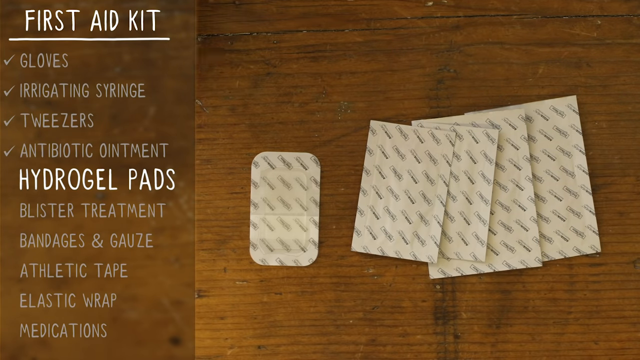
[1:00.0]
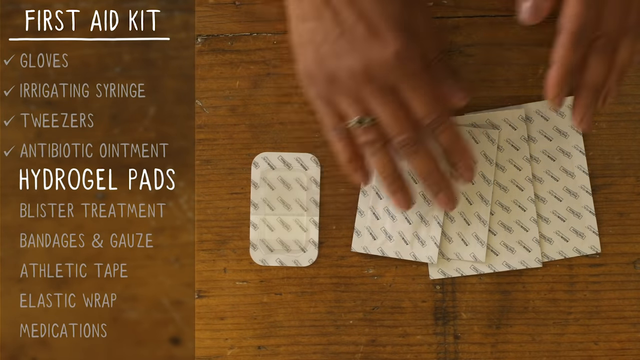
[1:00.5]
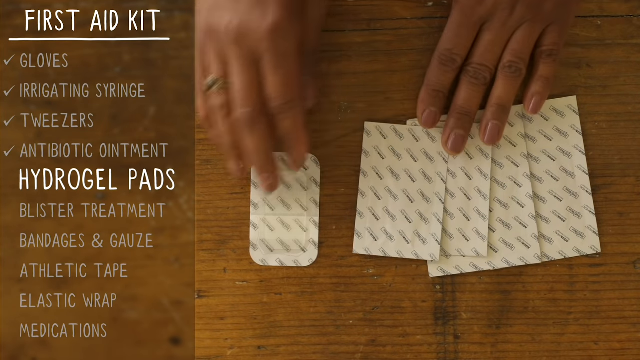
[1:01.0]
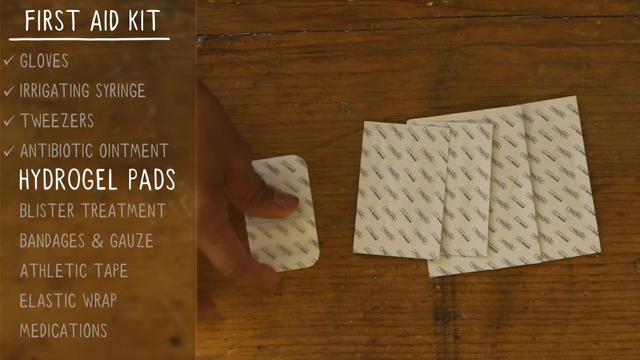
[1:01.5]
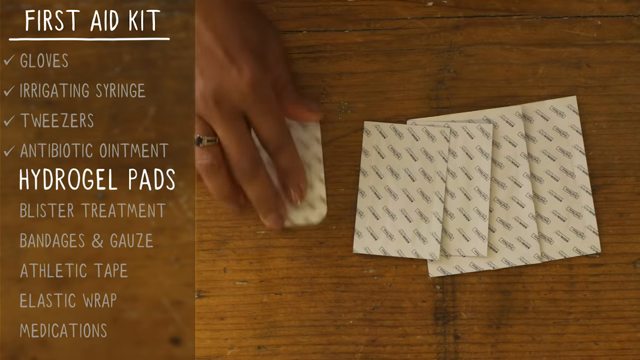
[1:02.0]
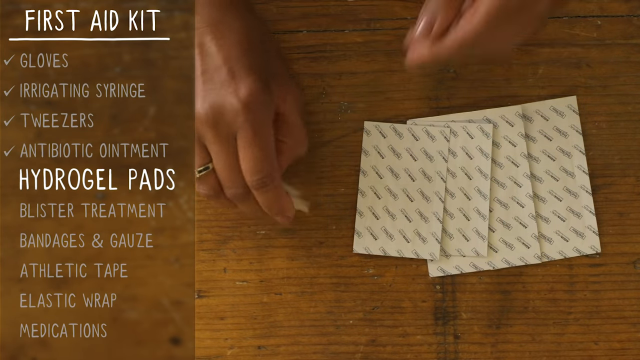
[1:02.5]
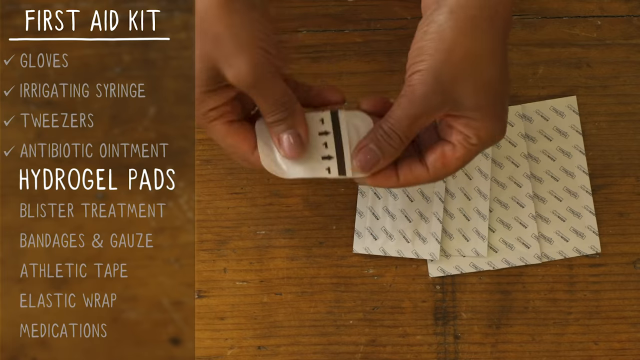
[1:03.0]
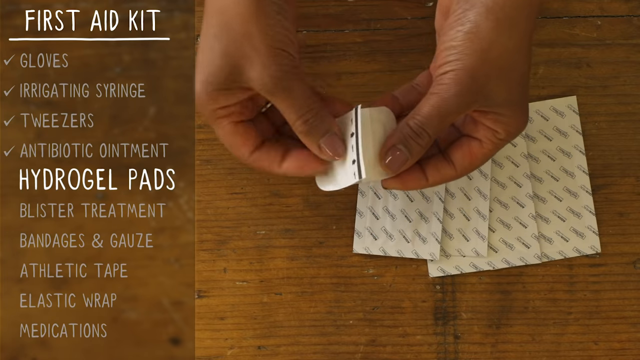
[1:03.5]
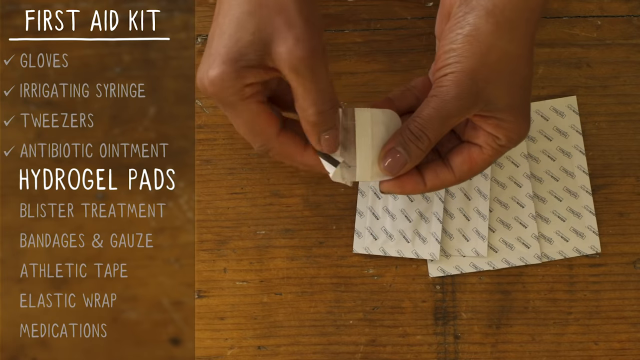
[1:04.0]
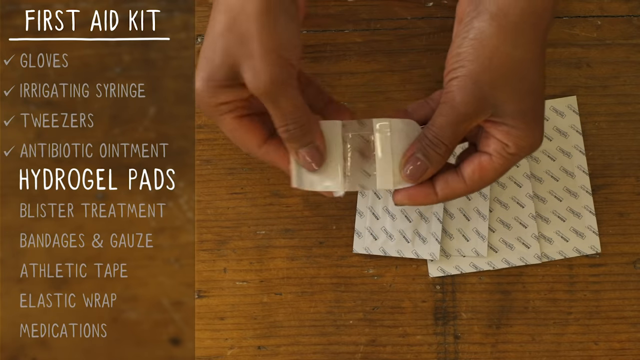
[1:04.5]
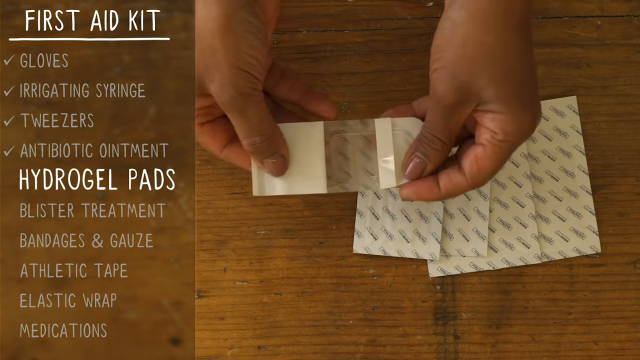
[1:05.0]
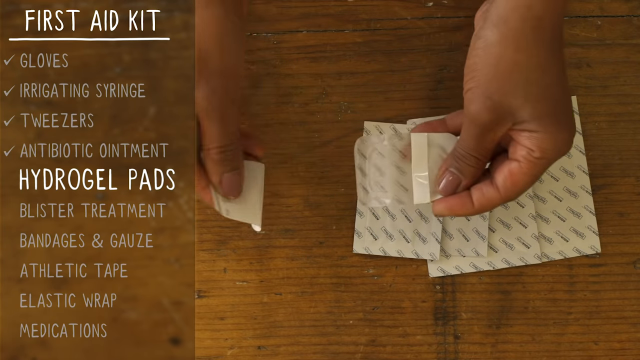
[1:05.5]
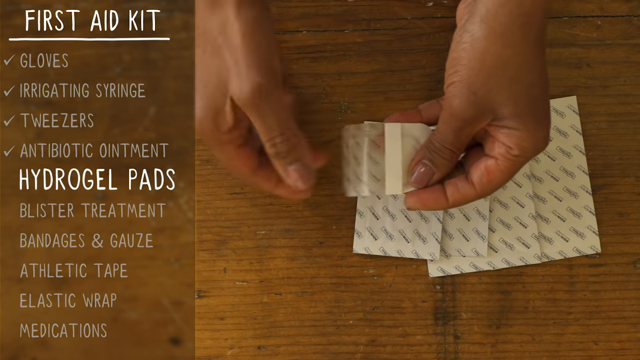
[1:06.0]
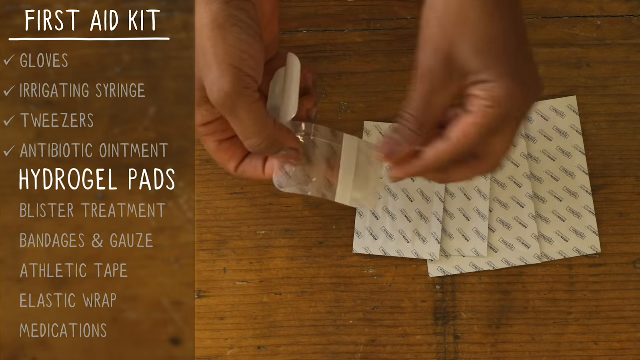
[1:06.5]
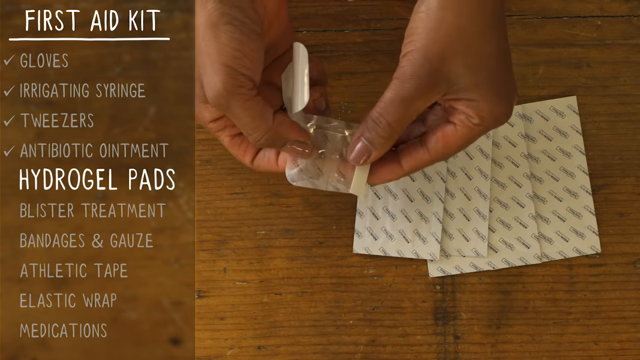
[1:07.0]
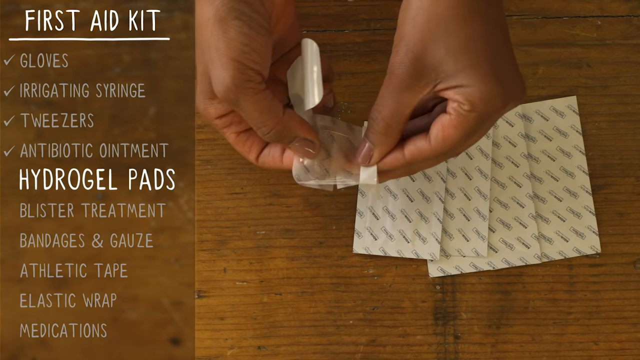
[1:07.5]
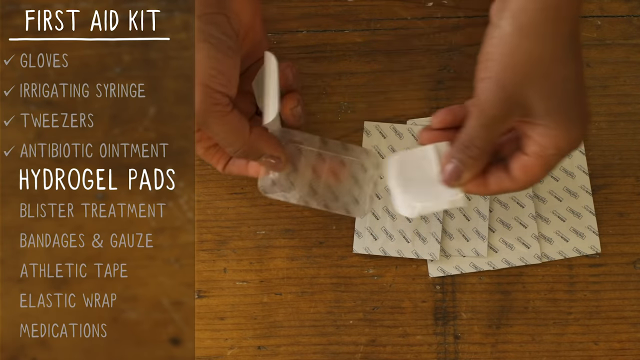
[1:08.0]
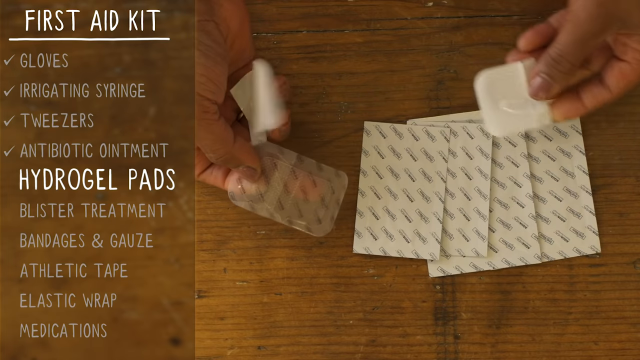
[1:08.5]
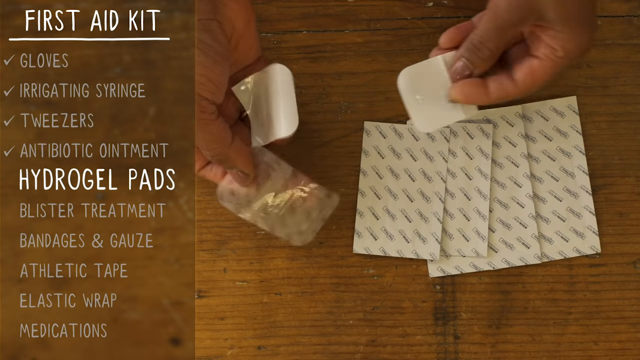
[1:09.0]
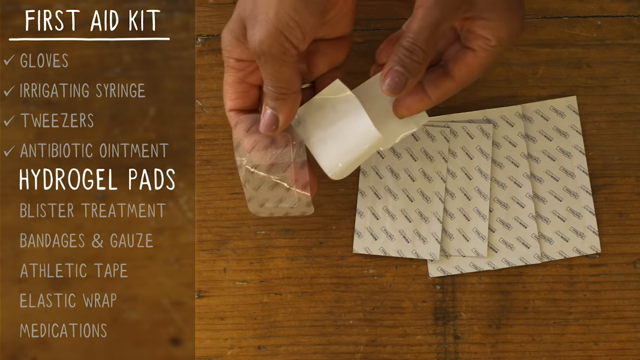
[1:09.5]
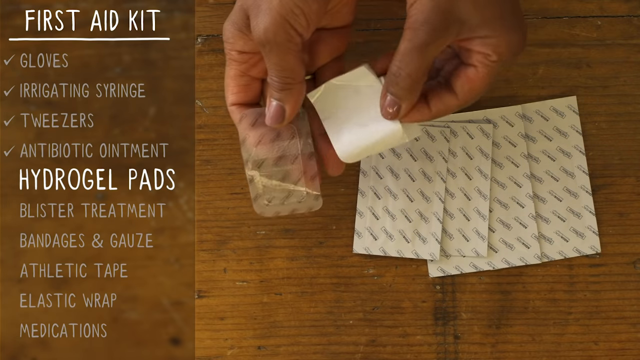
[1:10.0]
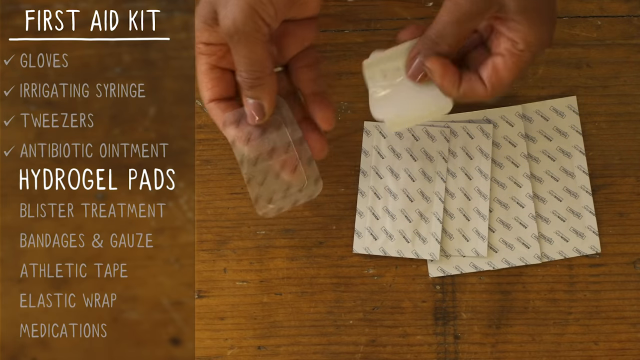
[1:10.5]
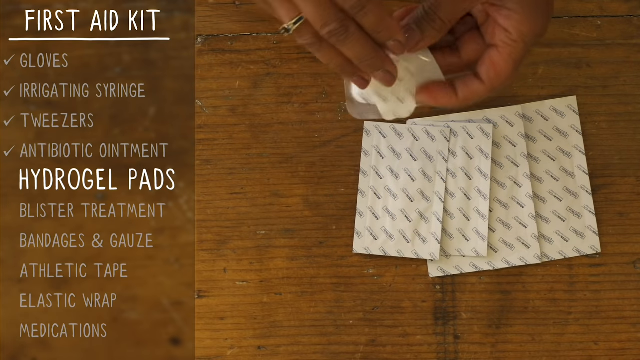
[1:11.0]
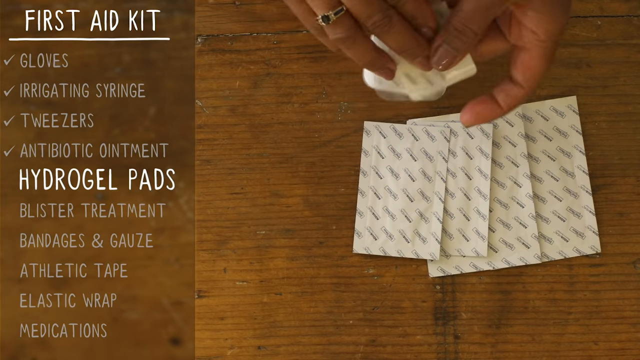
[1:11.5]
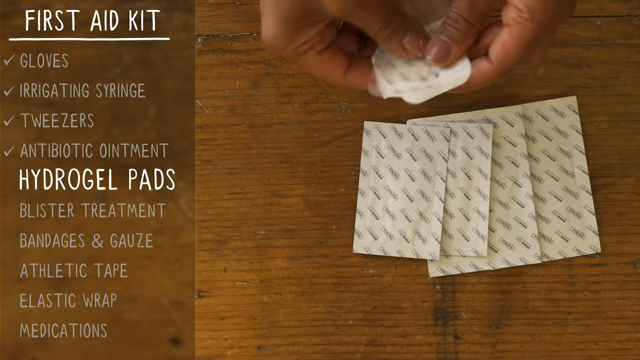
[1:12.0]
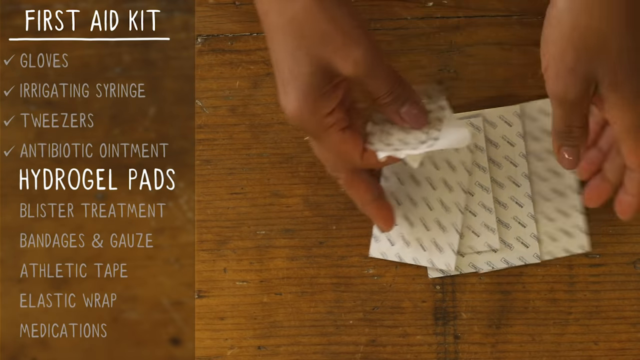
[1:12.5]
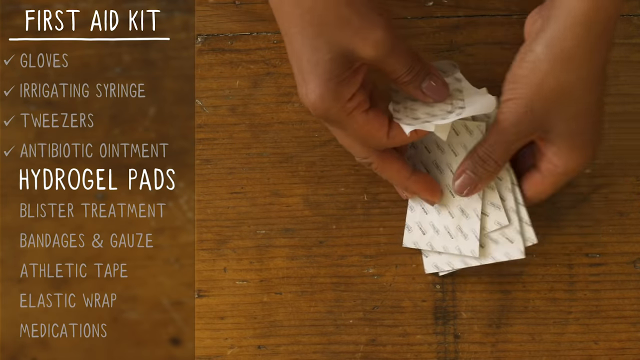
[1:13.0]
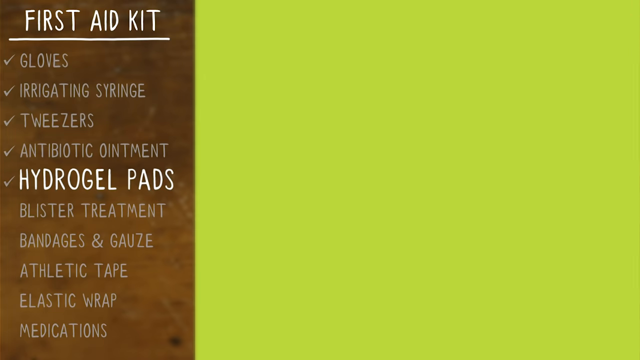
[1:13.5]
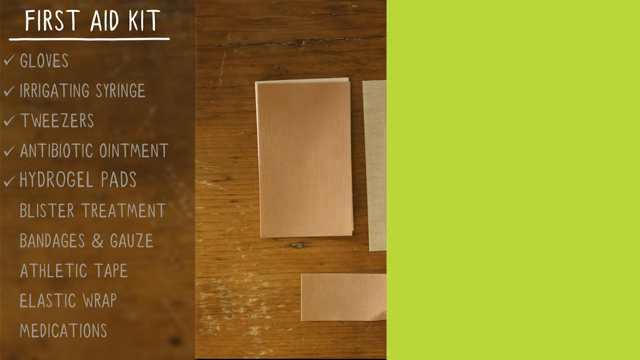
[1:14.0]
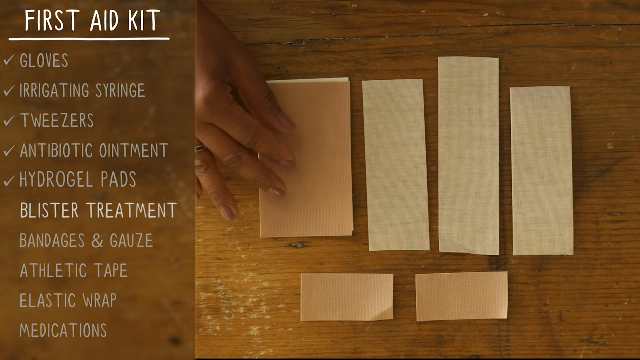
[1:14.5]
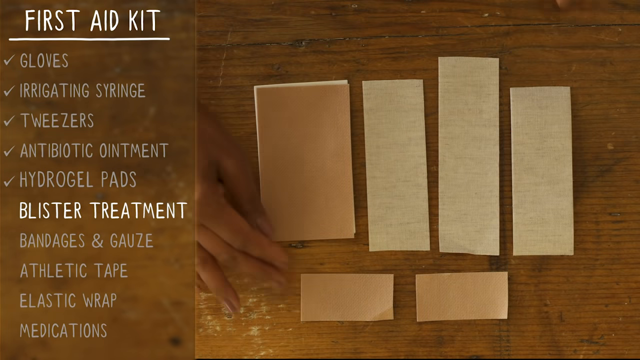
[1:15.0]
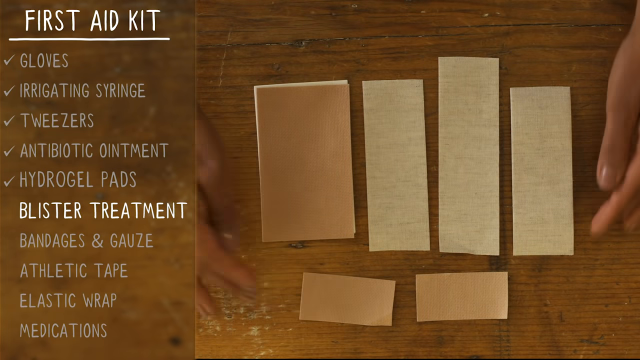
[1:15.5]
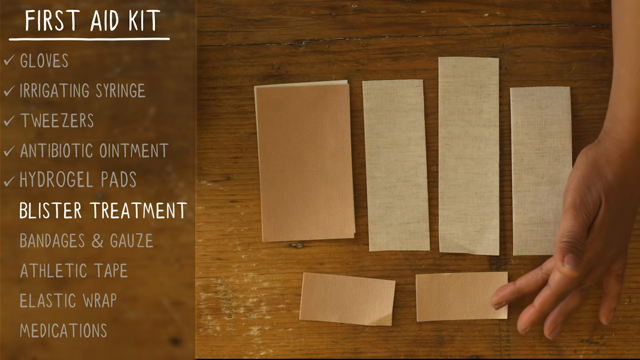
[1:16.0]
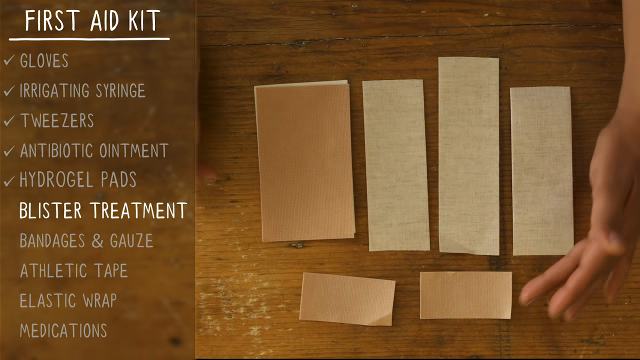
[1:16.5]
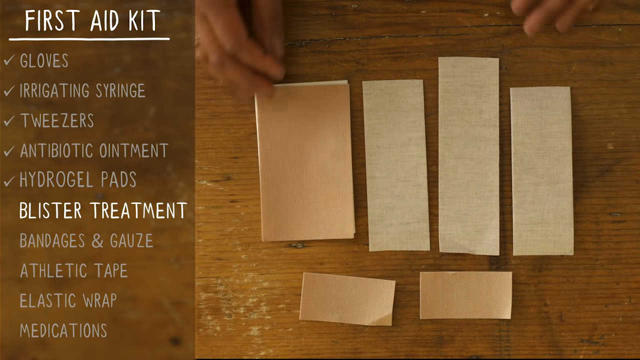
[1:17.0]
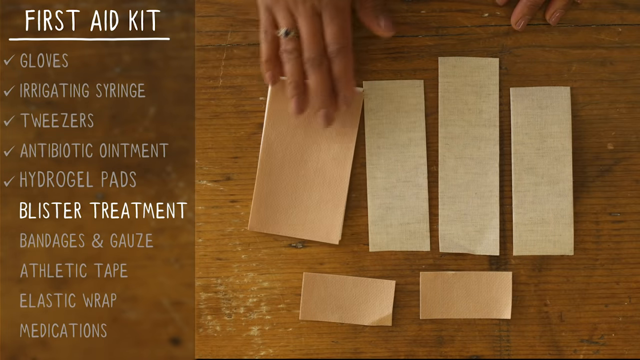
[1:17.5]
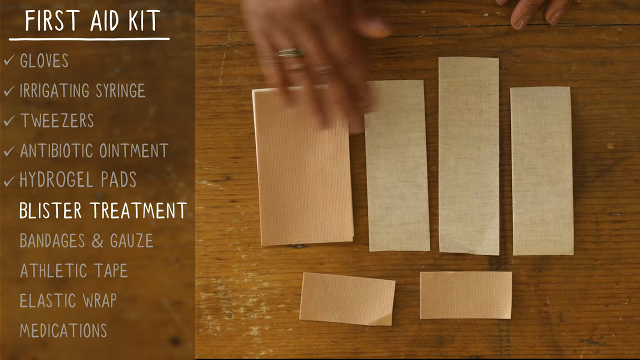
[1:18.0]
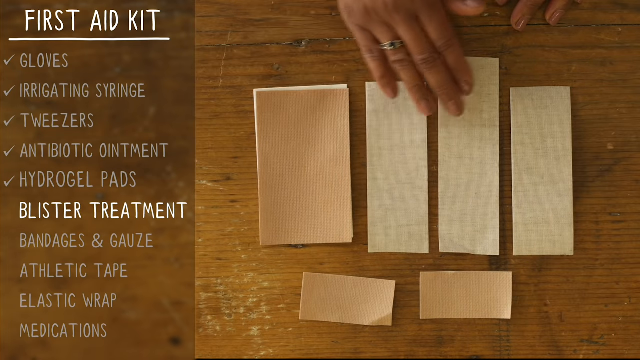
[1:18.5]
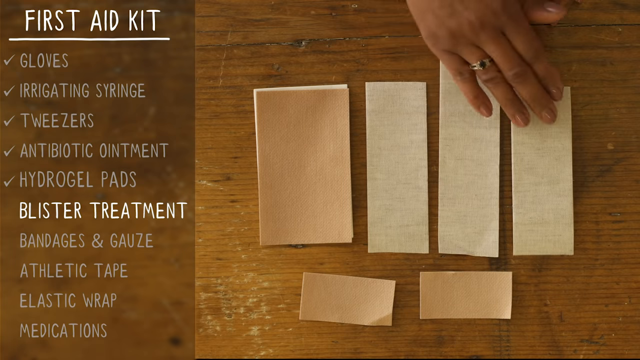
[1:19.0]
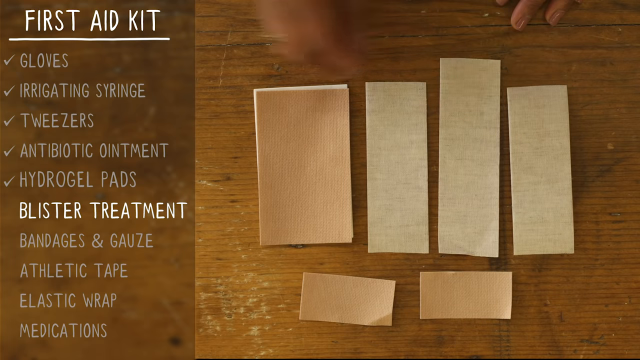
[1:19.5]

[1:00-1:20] On the left side of the screen, a list of items found in a first aid kit reads, in white uppercase letters, "first aid kit, gloves, irrigating syringe, tweezers, antibiotic ointment, hydrogel pads, blister treatment, bandages and gauze, athletic tape, elastic wrap, and medications". In the main footage, five hydrogel pads of different sizes are laid out across a large wooden table. A pair of African American hands comes into view and picks up one of the pads, peels the adhesive backing off half of it, then peels the remaining backing off the back and shows the pad to the camera. The hand on the left side of the screen has a small black and silver ring on the ring finger. The video then cuts to a close-up of six blister treatment pads of different cuts and sizes, which the hands make sure are neatly arranged on the wooden table.